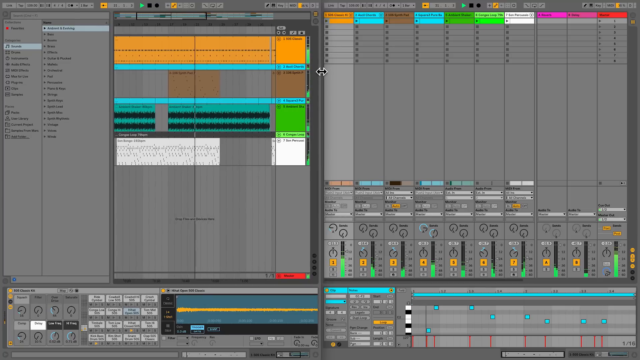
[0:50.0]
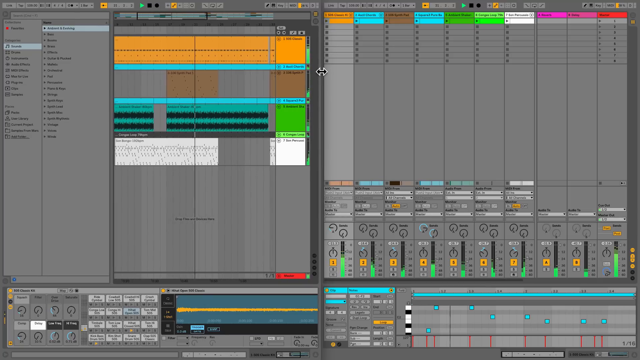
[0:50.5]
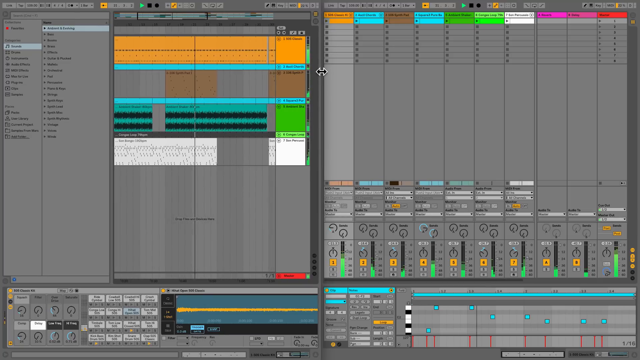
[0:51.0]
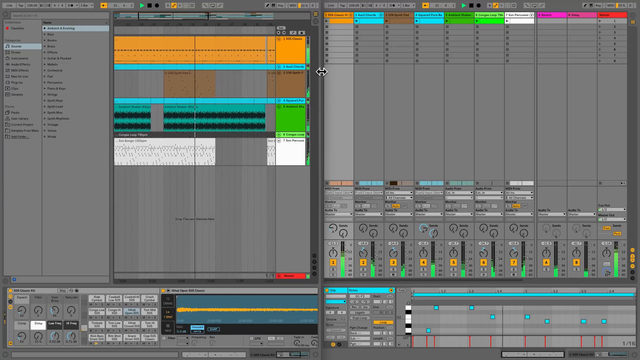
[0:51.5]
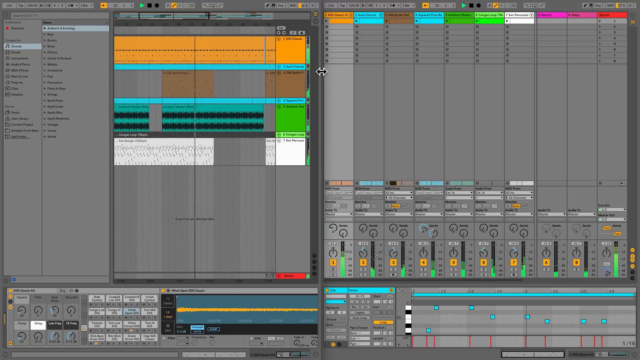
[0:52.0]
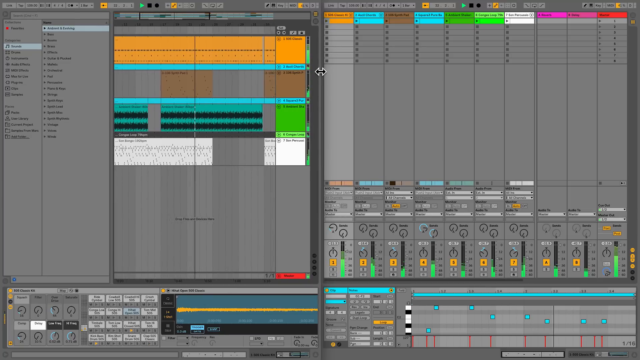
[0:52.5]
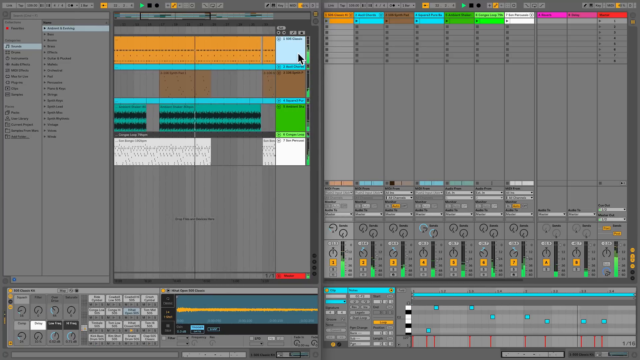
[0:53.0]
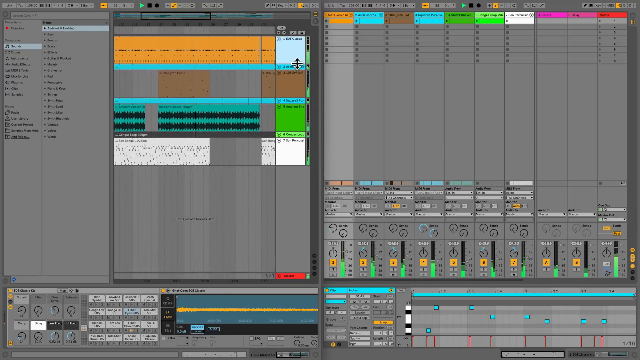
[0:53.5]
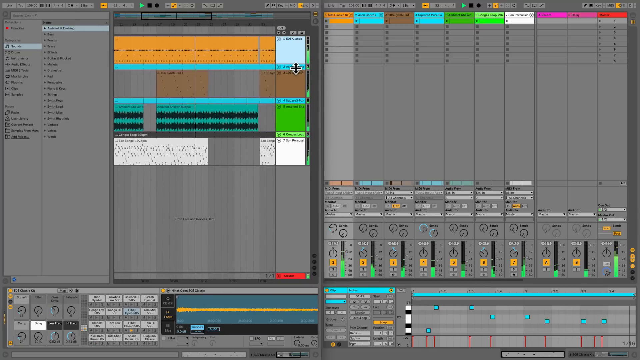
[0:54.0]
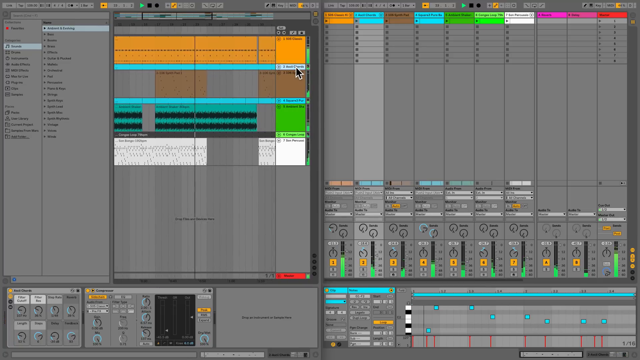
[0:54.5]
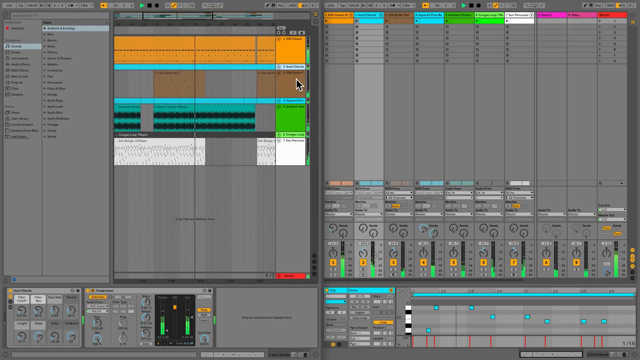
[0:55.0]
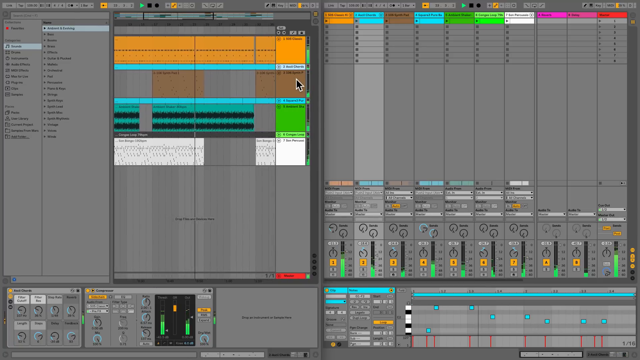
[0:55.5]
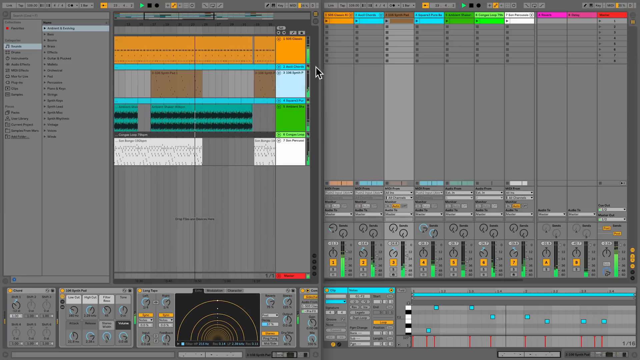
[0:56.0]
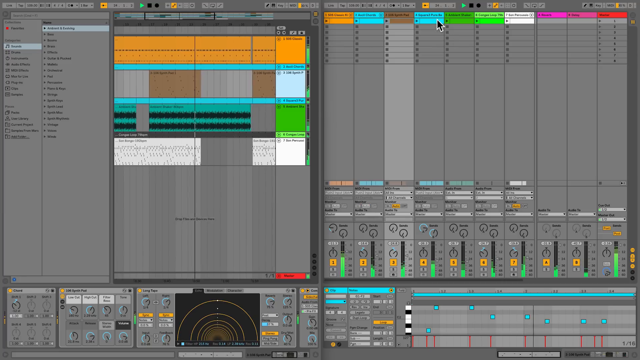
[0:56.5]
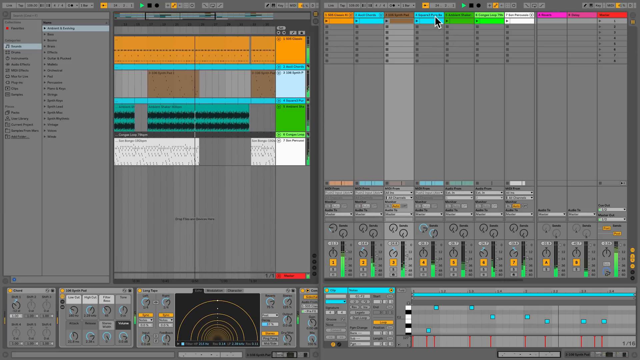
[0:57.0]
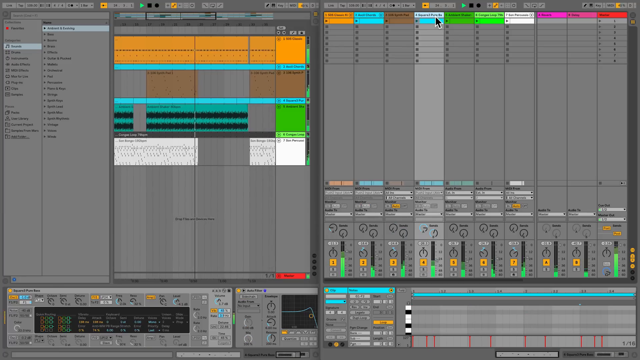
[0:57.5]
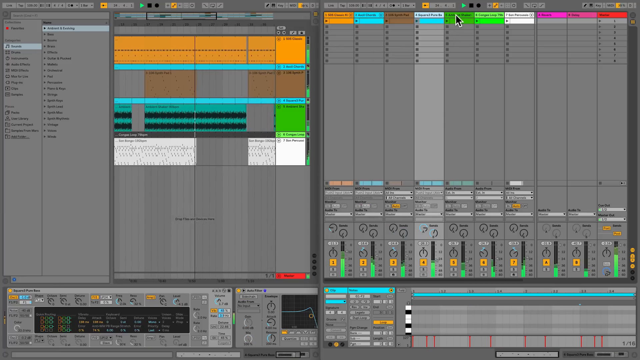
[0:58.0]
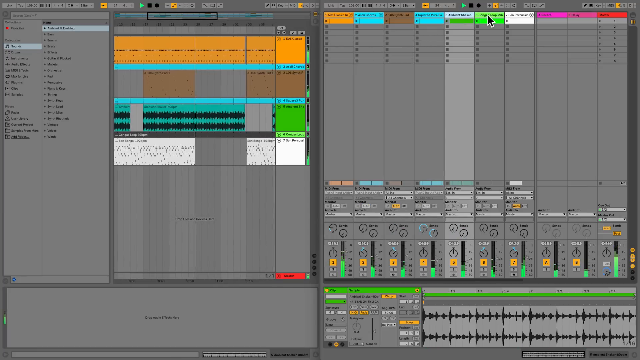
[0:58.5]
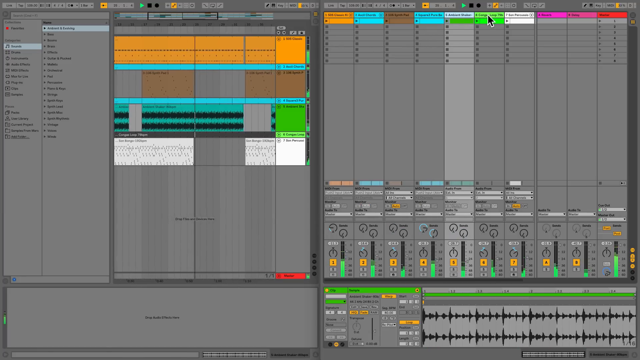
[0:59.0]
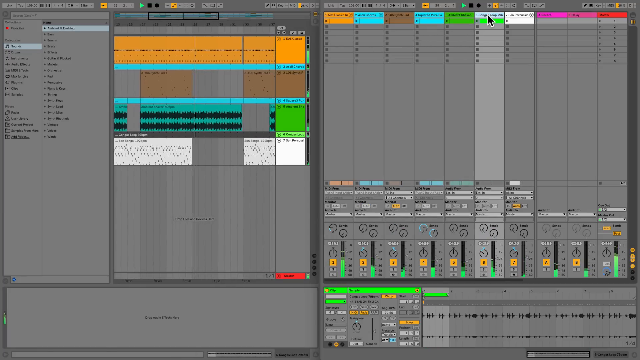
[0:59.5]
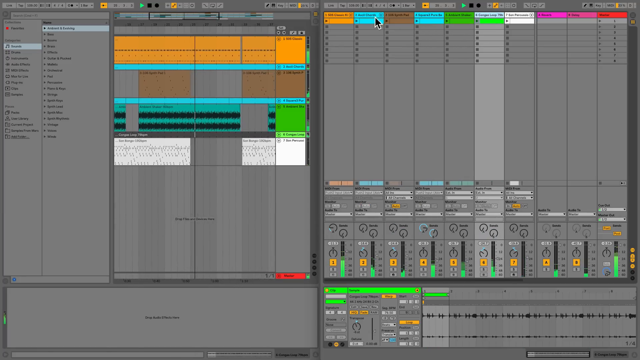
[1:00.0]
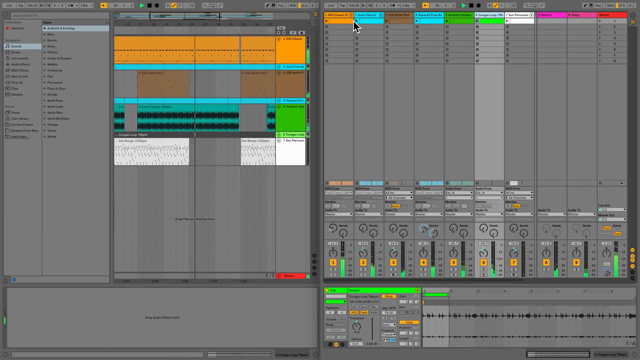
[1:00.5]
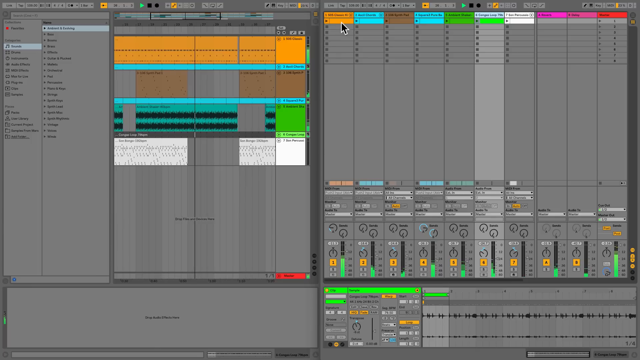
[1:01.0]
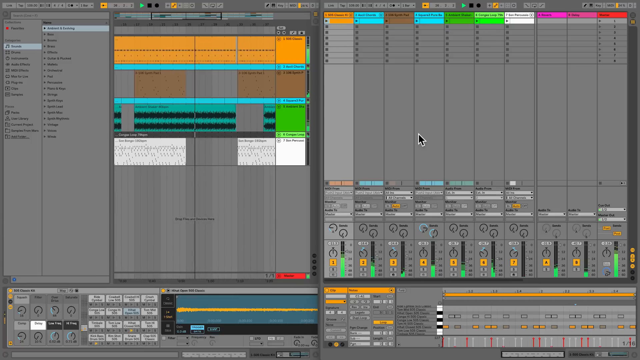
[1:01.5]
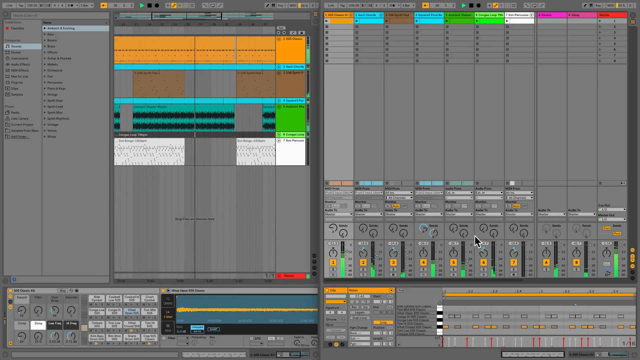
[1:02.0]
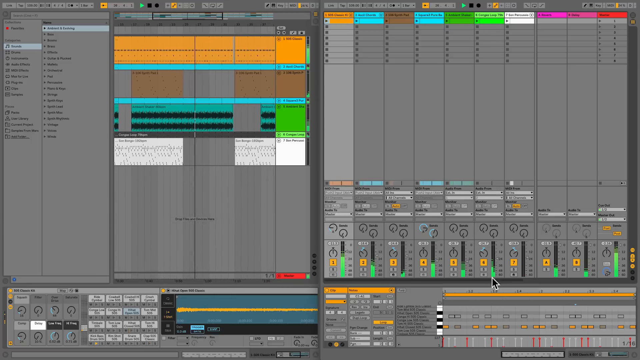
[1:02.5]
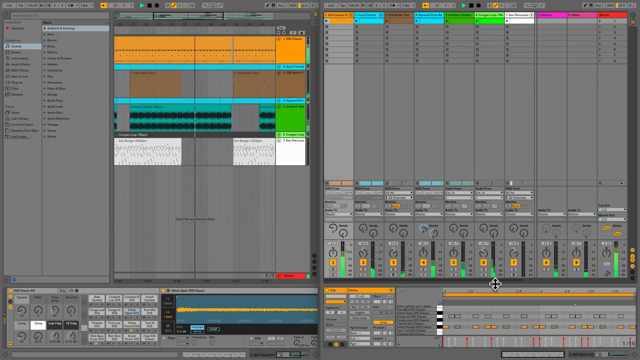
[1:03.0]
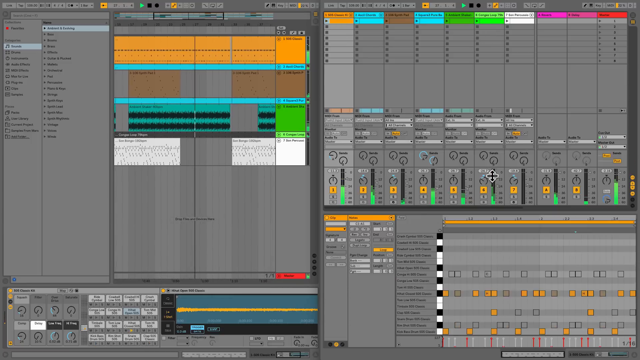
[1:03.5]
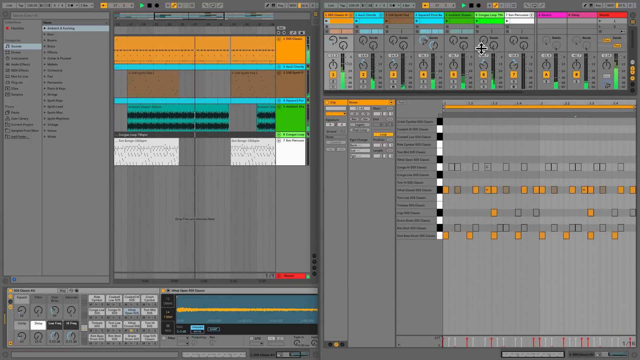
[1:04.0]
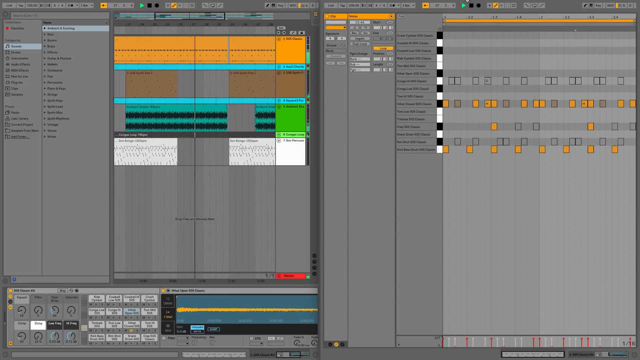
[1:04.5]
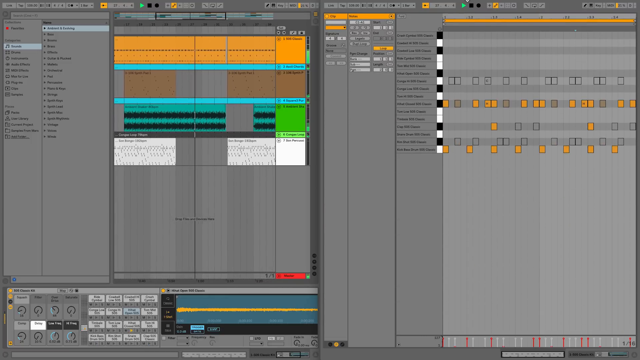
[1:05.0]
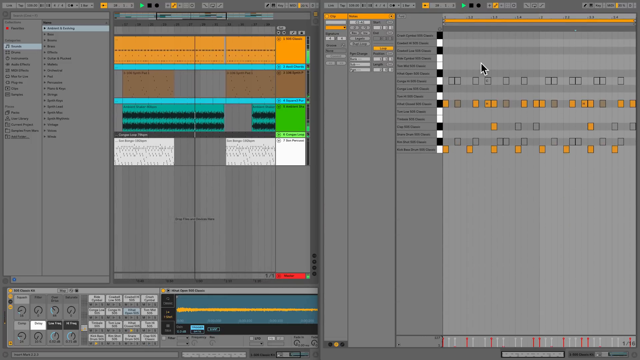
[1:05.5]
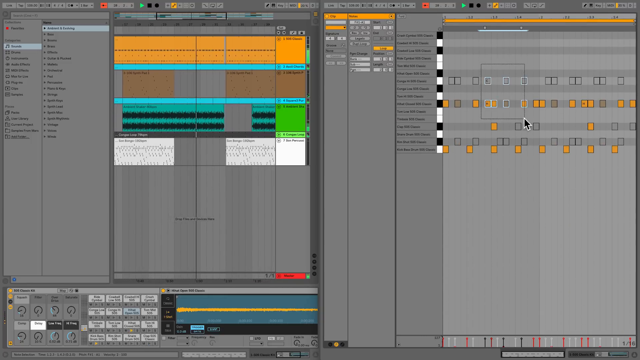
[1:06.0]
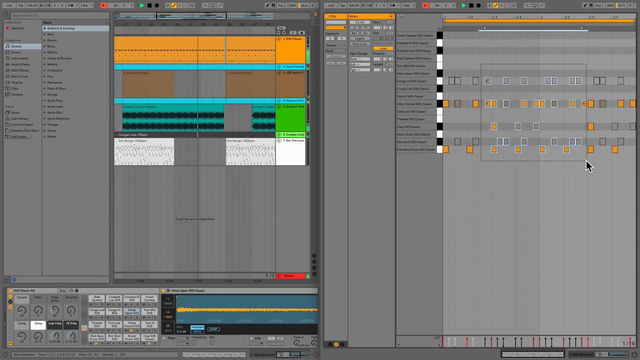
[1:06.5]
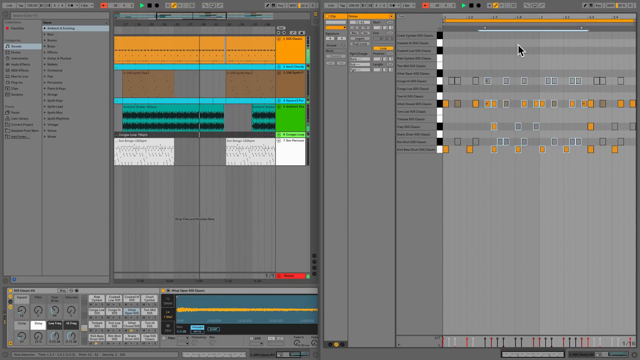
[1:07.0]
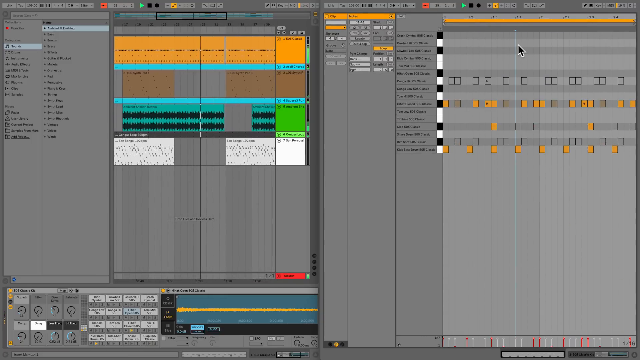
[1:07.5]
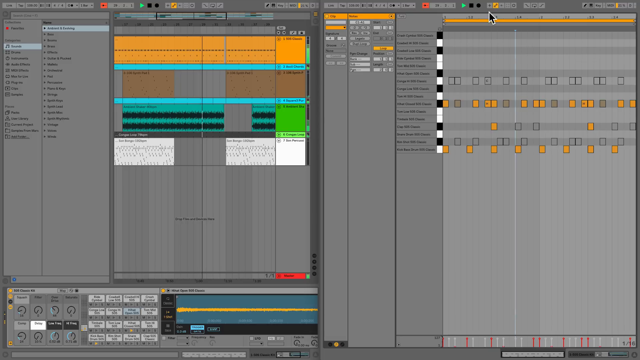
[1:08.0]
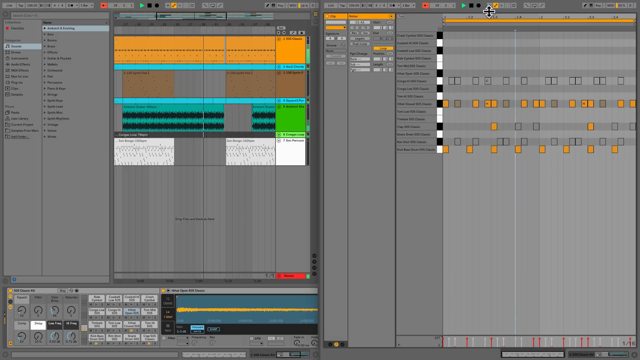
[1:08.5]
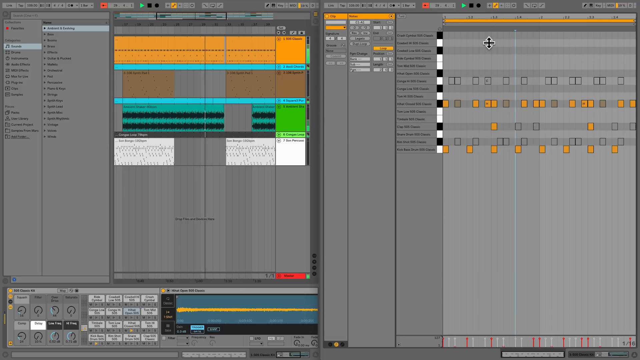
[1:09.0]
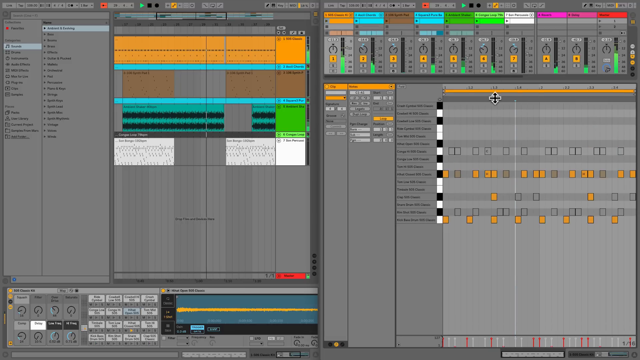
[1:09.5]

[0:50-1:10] A split screen shows the main screen with the horizontal colored bars on the left and, on the right, the screen with different volumes going up. Then the bottom of the screen changes, with lots of different patterns and designs. All the way to the left is a small box with different types of buttons and circular designs. Next to it is a slightly wider box with the same designs, except some of the boxes above them are white with wording. Then there is an even larger box with different buttons, including yellow buttons. In the center is a large black box containing a wide circle with smaller circles and half circles inside going all the way to the center, almost like a radar screen, with little dots on each of the circles. Further across are lots of other buttons and elements. All the way at the end is a large area with a thin baby blue line across the top; below that line, tiny baby blue boxes are scattered throughout the plain area, and below the baby blue boxes are thin red lines. Then all of that disappears and static lines appear. The screen then gets bigger, and tiny yellow boxes are scattered across a plain area.